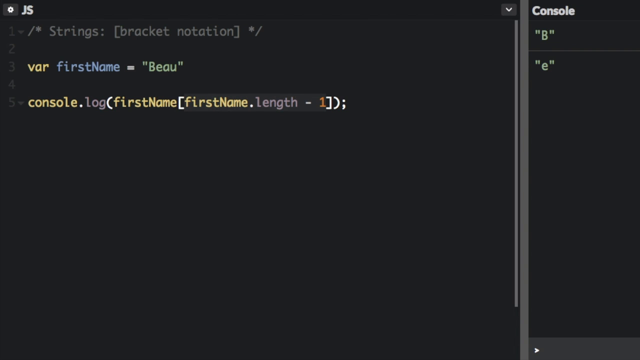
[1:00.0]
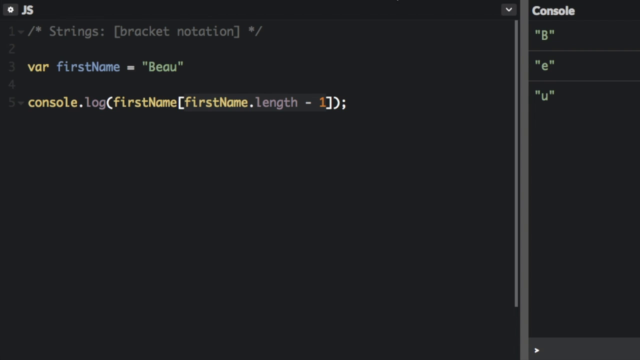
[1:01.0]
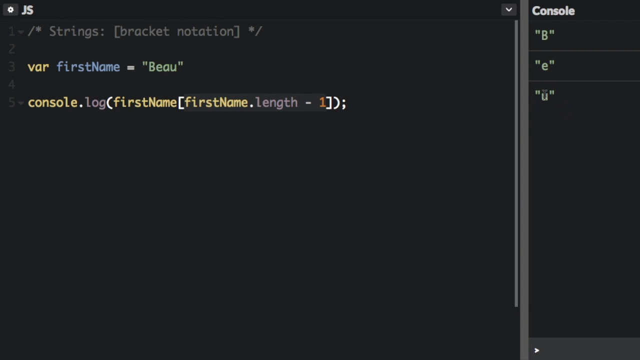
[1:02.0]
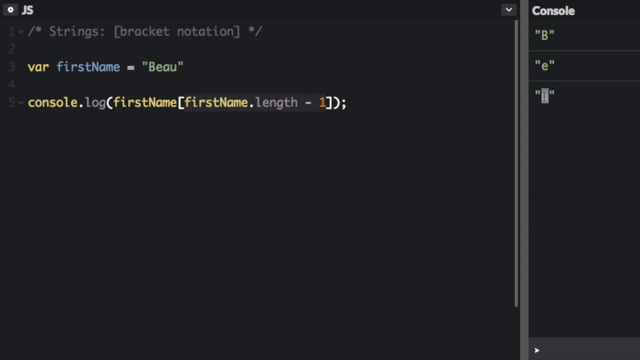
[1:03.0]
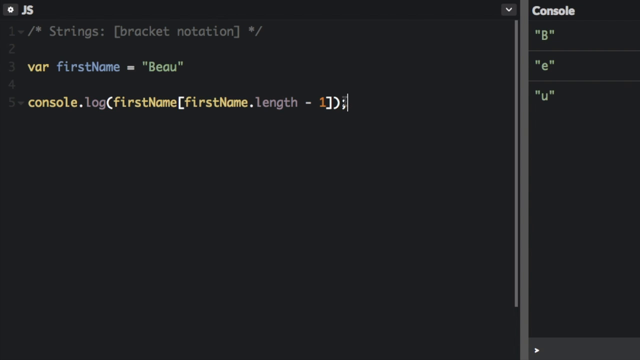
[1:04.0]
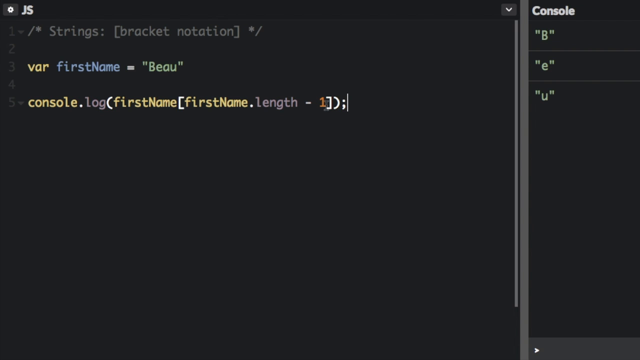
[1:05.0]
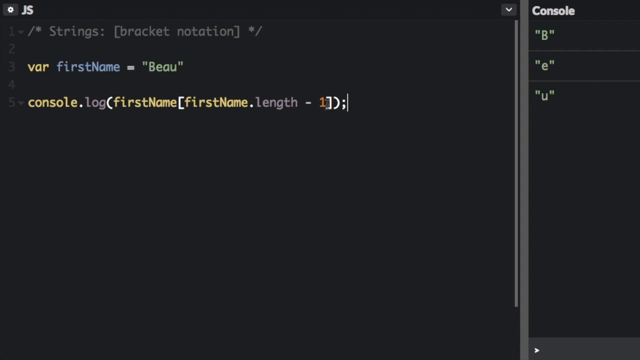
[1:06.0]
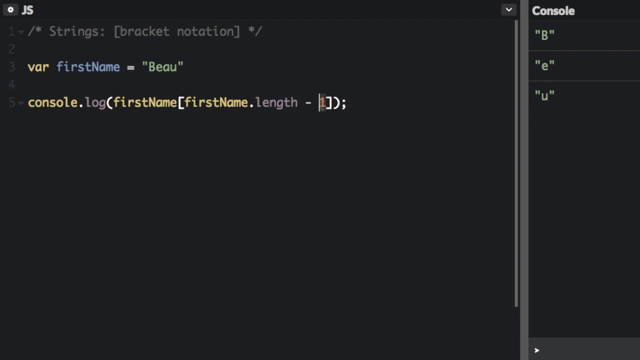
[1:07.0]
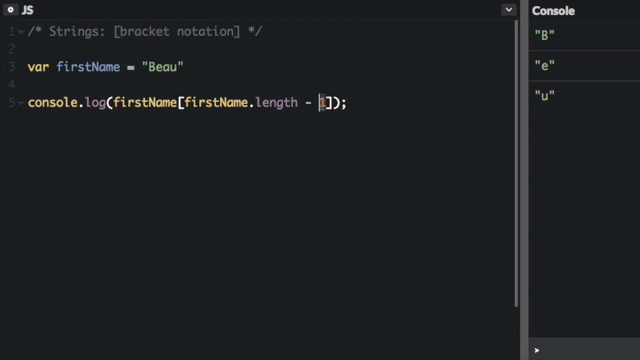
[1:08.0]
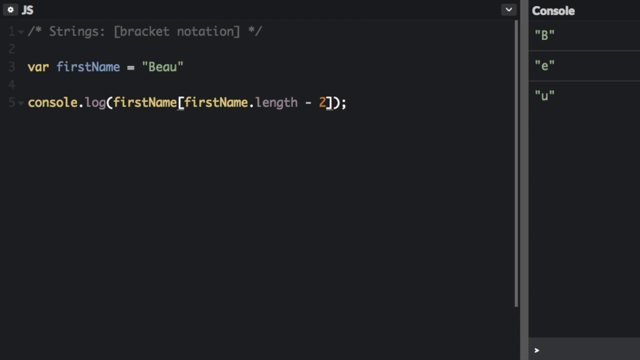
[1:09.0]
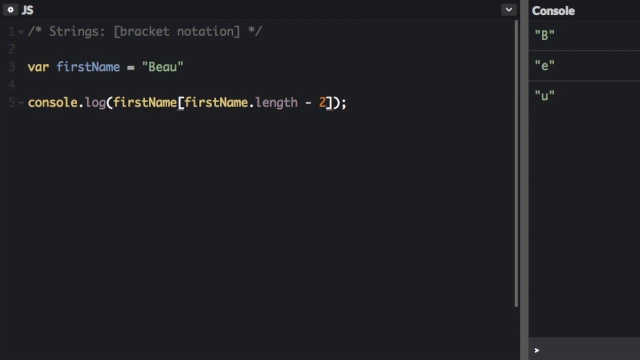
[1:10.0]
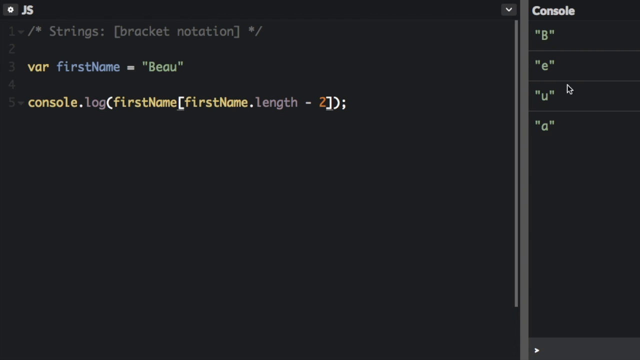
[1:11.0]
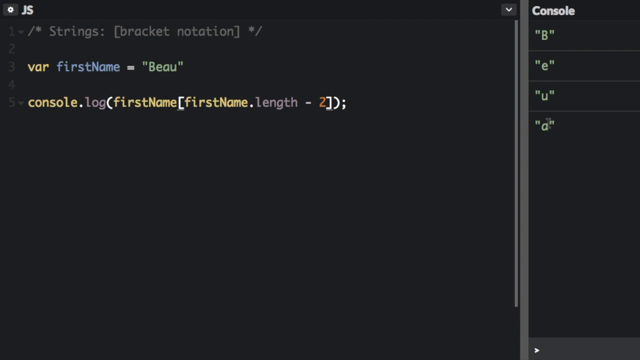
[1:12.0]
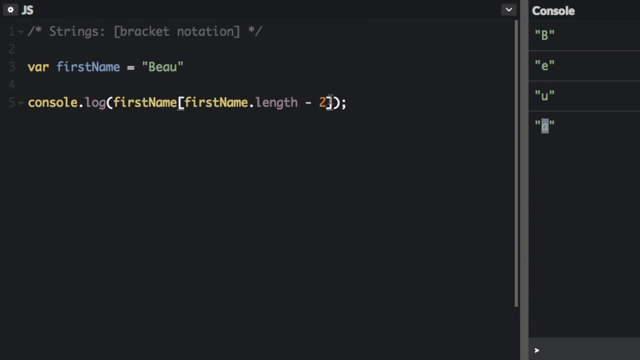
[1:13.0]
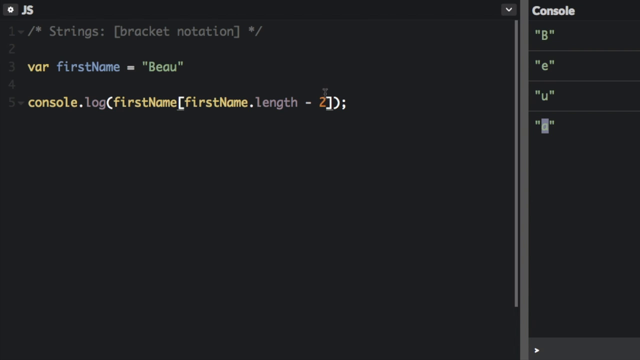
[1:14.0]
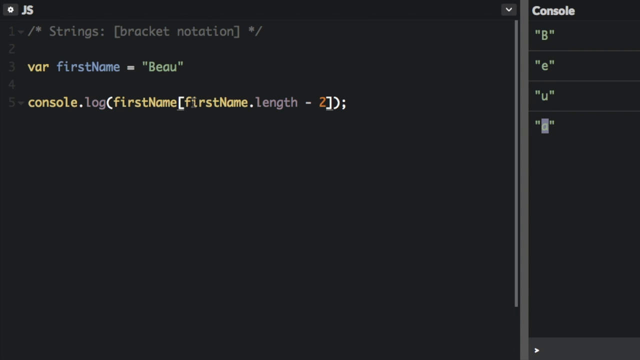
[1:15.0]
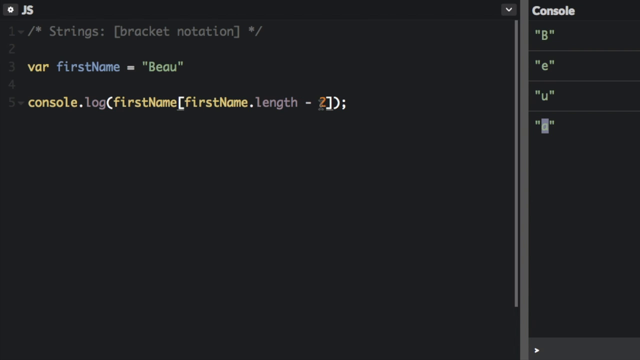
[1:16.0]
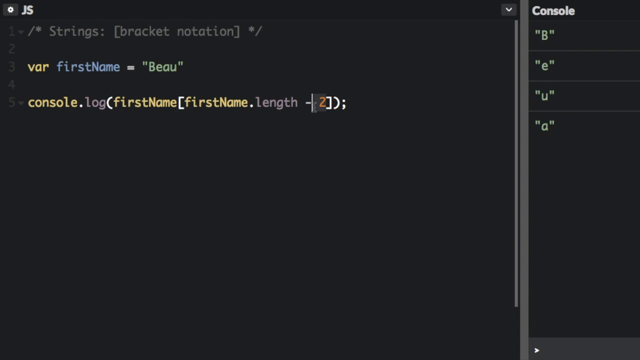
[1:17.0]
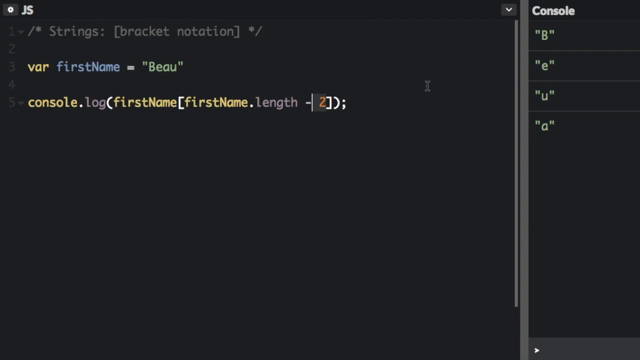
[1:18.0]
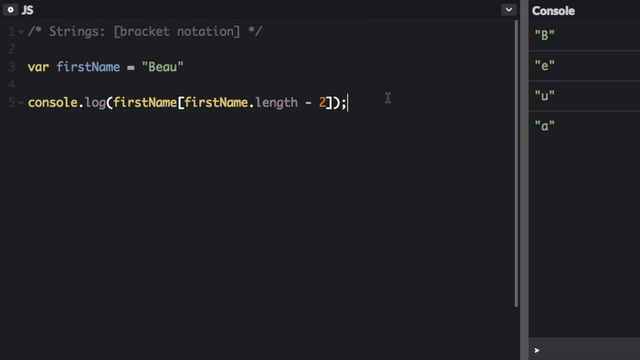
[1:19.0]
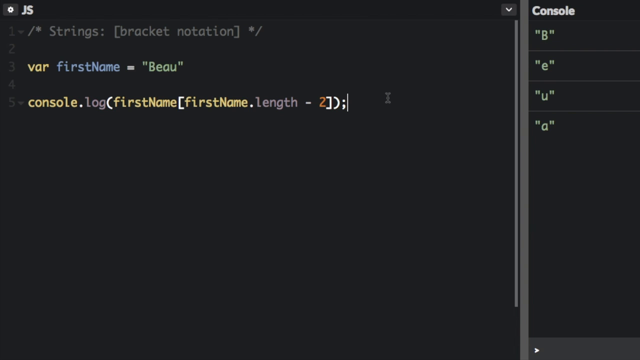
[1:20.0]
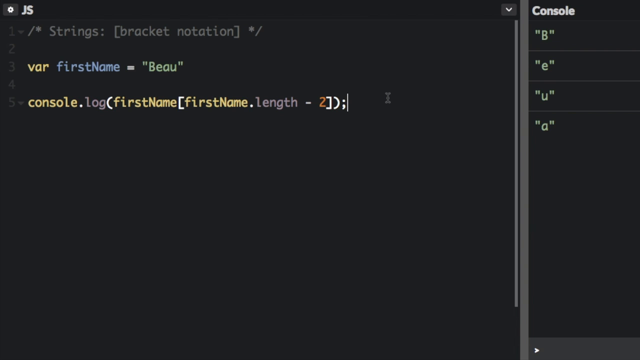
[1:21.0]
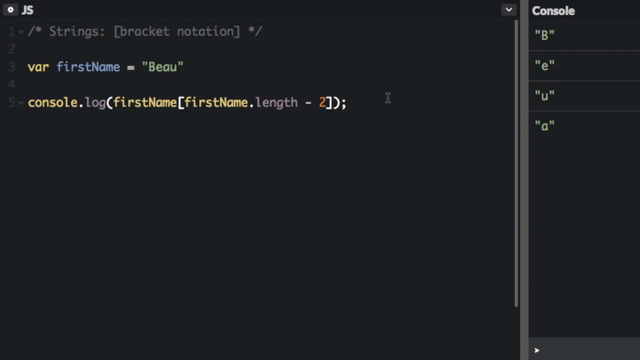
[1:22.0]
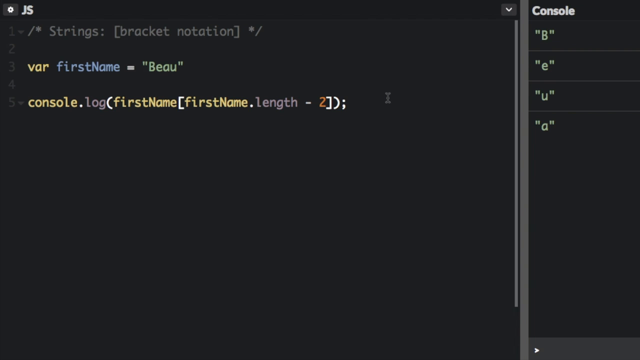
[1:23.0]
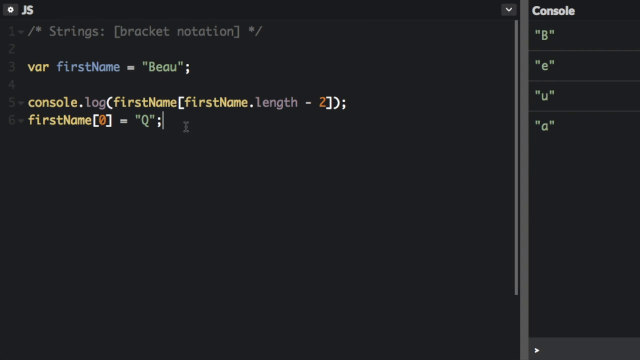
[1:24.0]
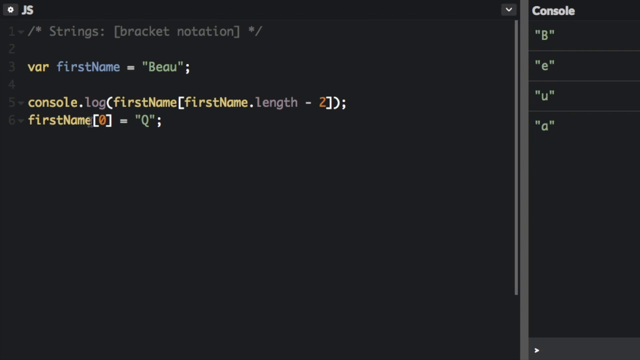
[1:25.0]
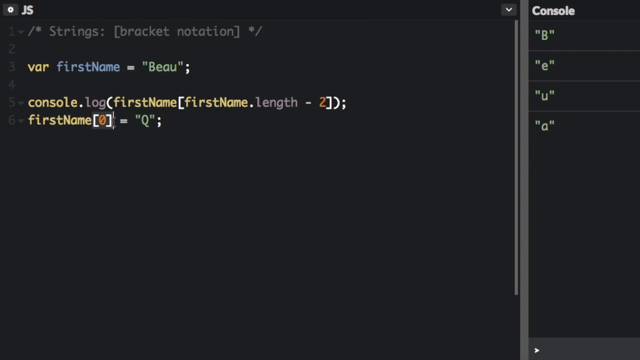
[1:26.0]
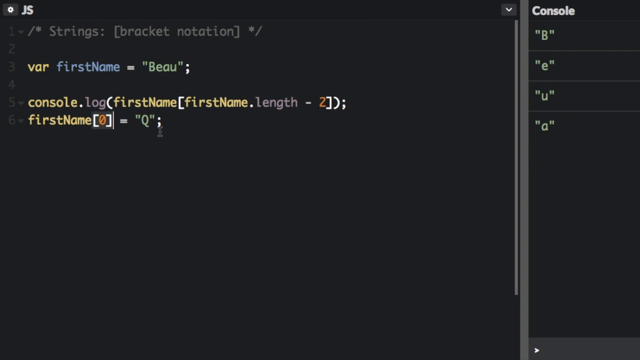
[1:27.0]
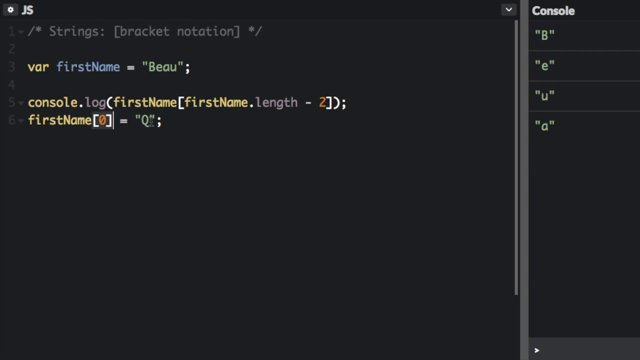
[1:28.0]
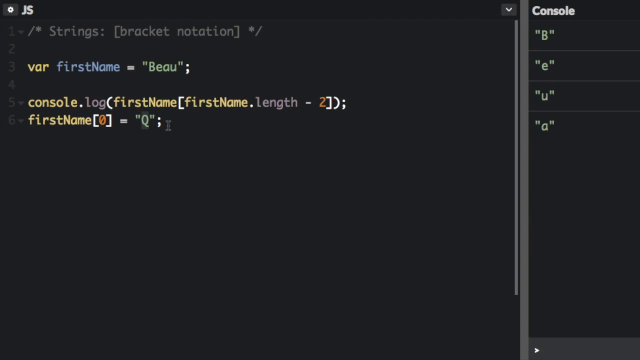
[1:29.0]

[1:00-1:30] The JS in the corner marks this as JavaScript. Under "console", below the previous entries, the entry "u" is made. The cursor highlights it, then moves back to the end of line 5 and along to just before the 1, changing the 1 to a 2, which is still in orange font. An entry "a" is then made in the list under "console". The cursor moves back to behind the semicolon on line 5. An entry then appears on line 6, starting with firstName in yellow font, followed by a Q. The changing entries seem to be a JavaScript string code snippet in a coding environment with an entirely black screen, where instructions are typed as freehand text.